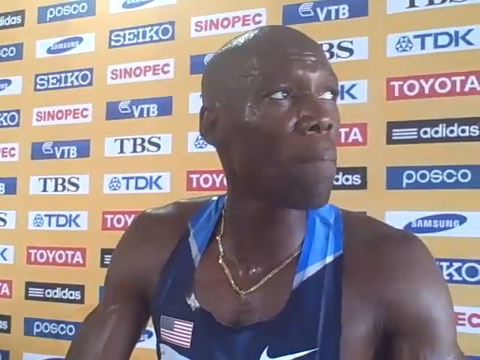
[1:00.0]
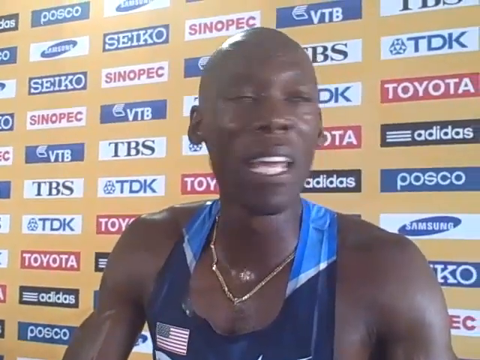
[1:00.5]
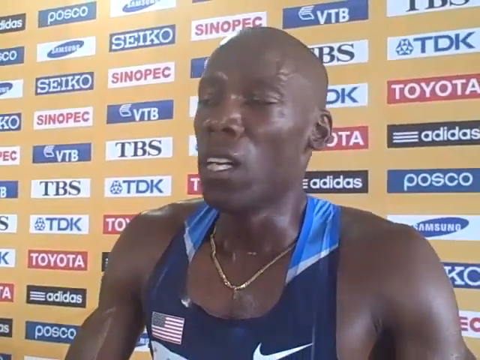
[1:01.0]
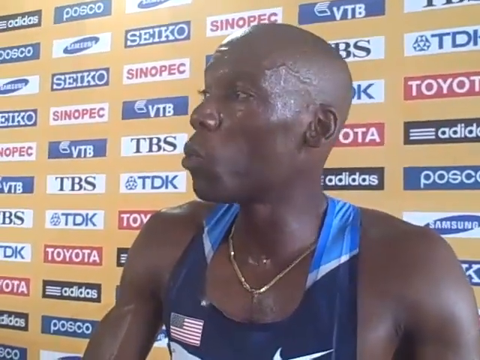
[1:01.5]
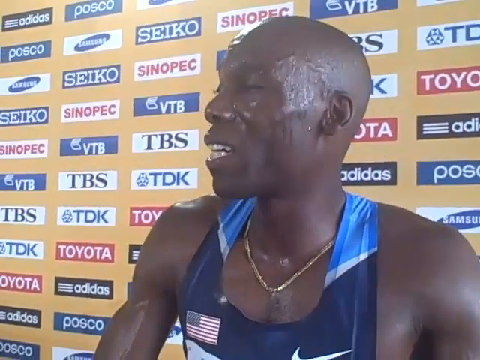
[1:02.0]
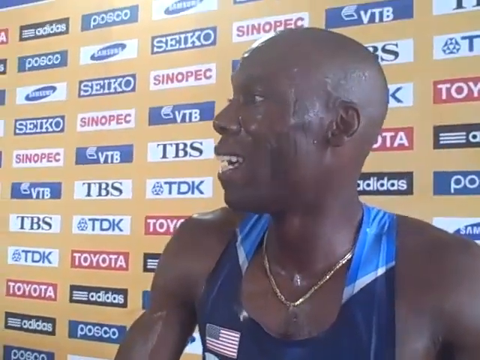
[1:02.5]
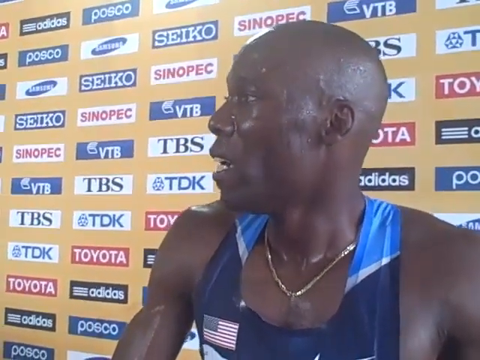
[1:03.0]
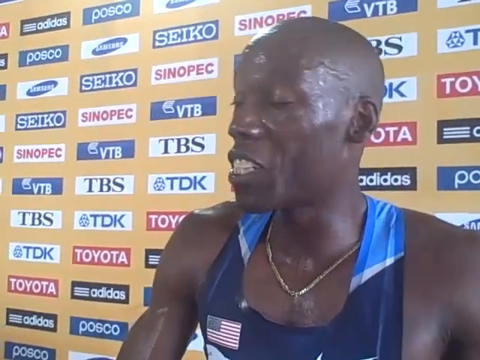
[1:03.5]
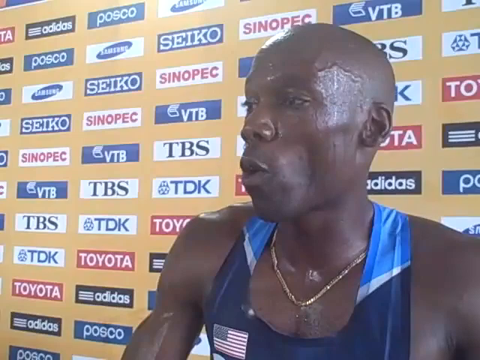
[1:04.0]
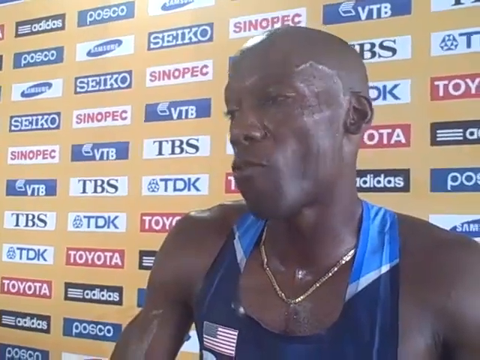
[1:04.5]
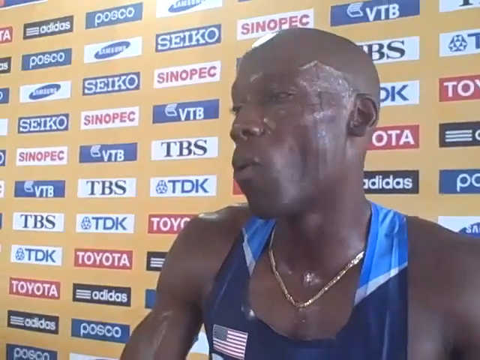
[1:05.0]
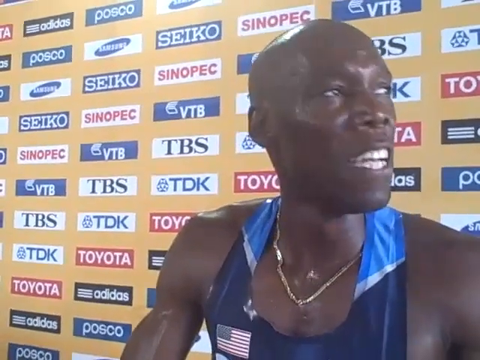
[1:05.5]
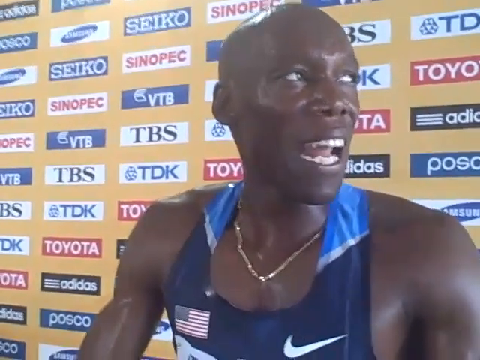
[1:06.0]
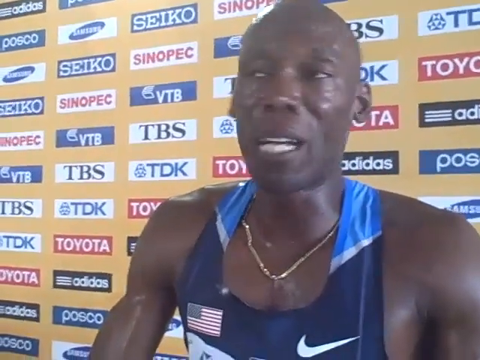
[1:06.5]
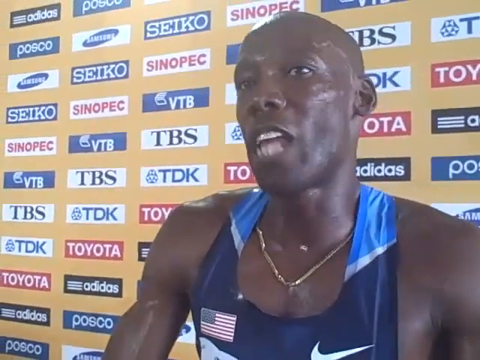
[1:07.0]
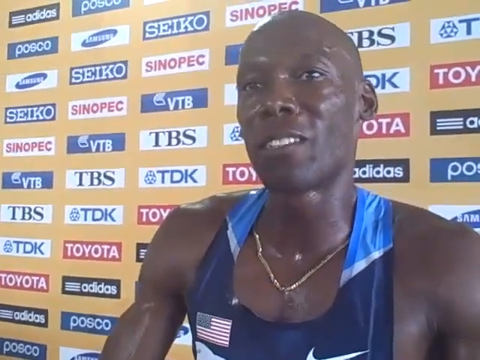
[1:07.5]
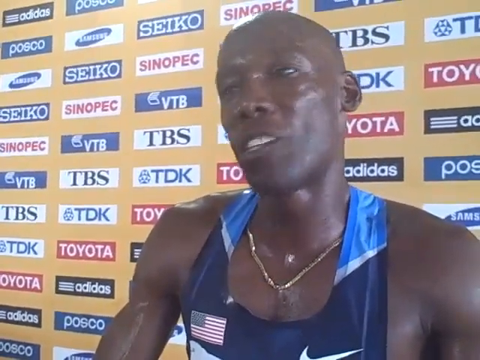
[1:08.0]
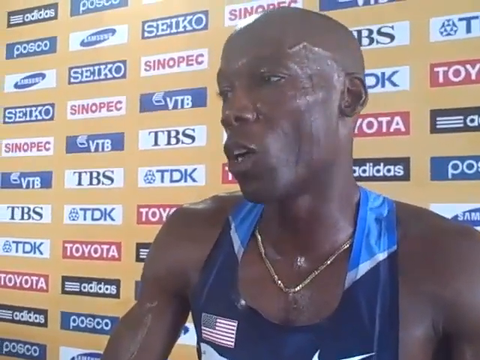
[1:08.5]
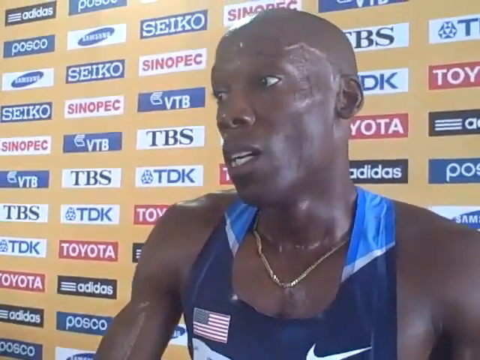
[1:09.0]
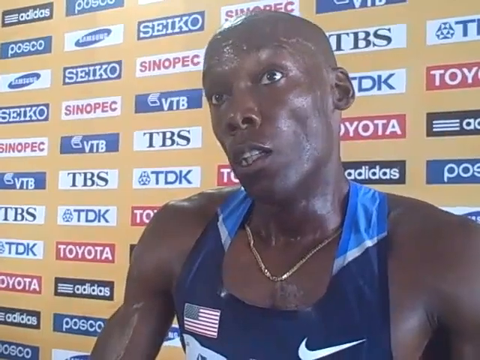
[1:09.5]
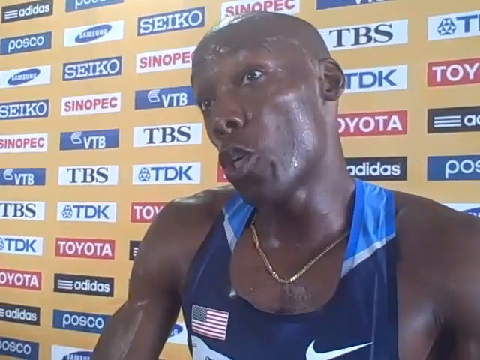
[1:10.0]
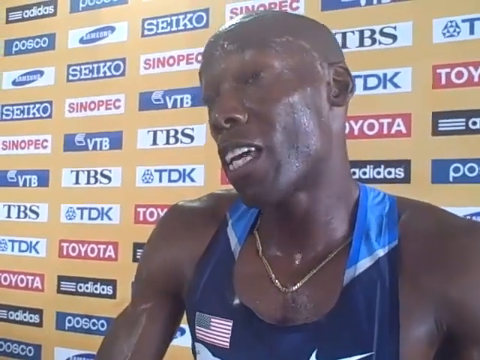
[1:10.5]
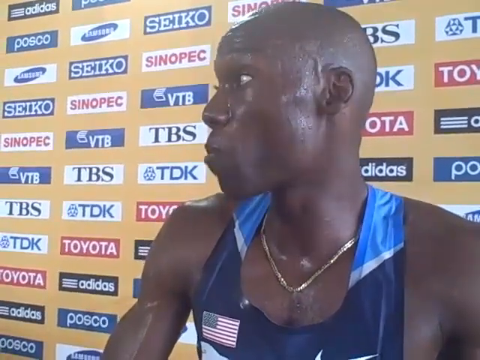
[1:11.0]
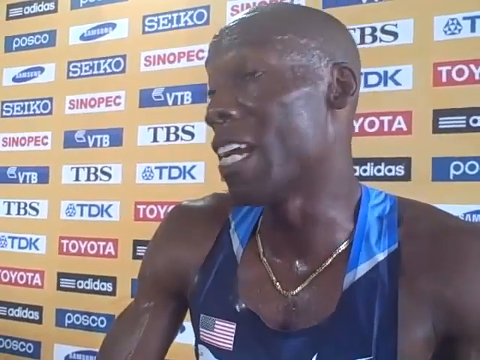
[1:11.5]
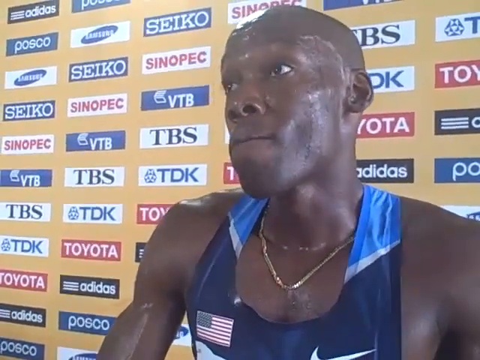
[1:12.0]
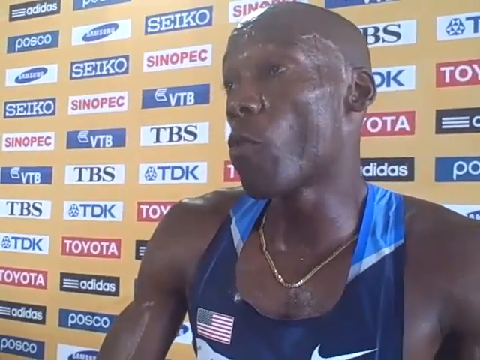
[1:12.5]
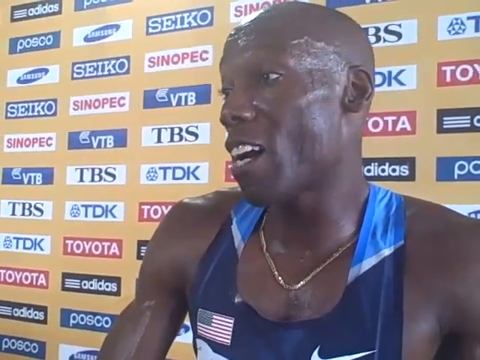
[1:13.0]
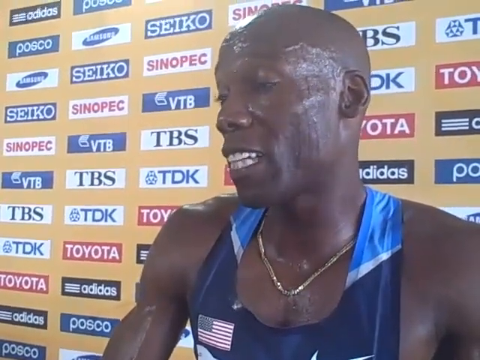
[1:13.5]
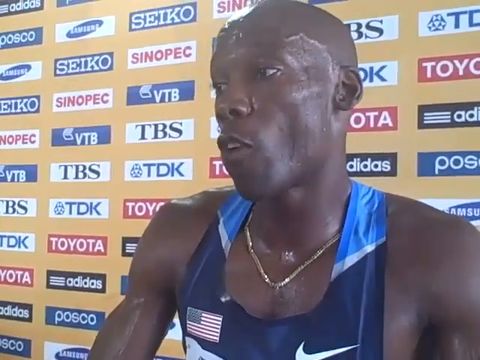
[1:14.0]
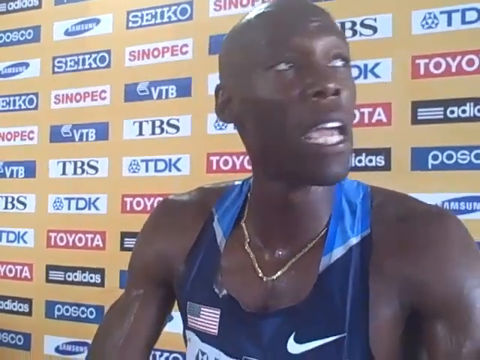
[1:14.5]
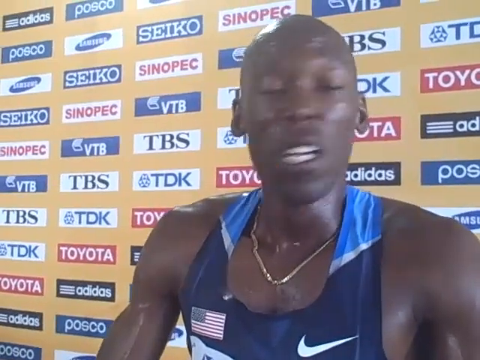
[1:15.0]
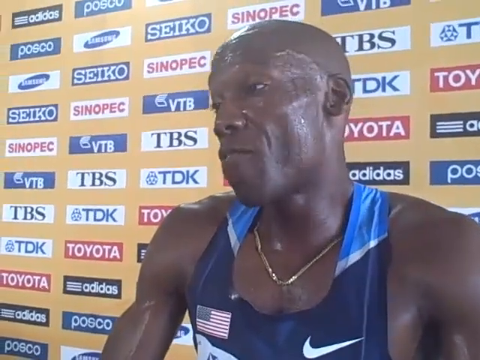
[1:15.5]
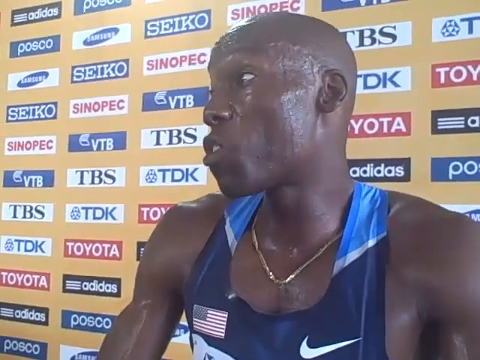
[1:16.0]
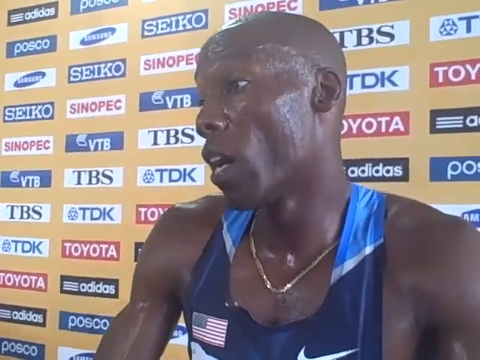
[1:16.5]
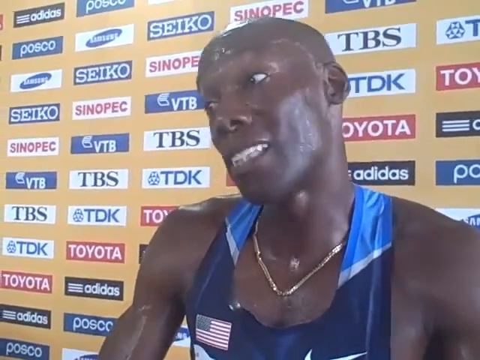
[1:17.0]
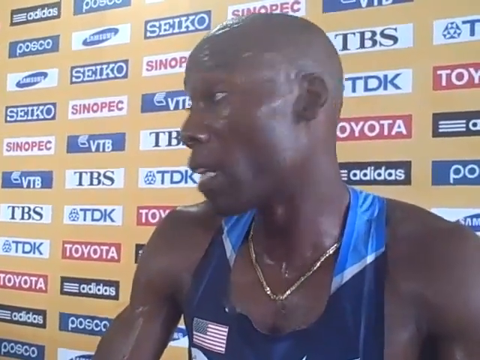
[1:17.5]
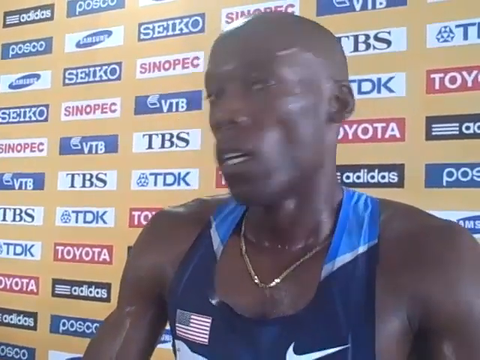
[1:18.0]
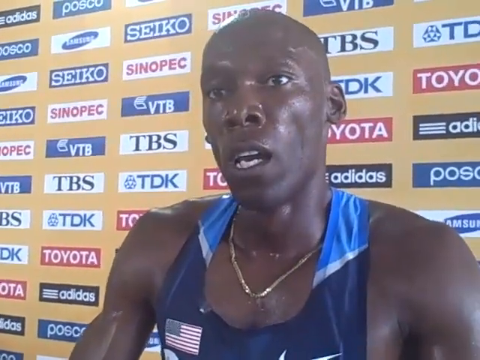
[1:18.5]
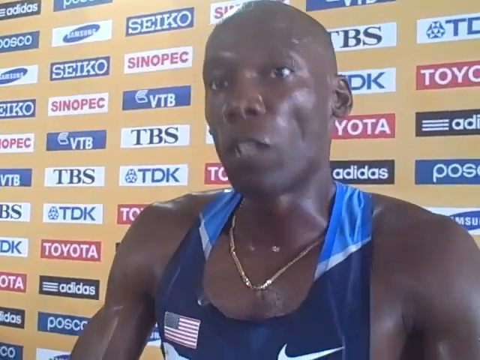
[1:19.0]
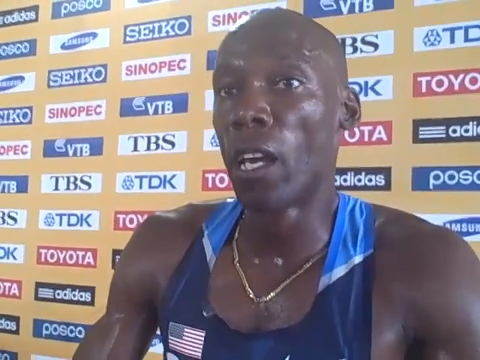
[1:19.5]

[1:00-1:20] He starts by looking towards his left side, turns back to face the interviewer, looks to his left again, and then quickly turns to his right side. He looks even more sweaty than before: sweat drips off his head, runs down his cheeks and lands below his neck. A closer look at his necklace shows it seems to be not just a gold chain but has a gold pennant in the center. He is still breathing heavily. The muscles on his arm are visible, specifically his biceps, with veins bulging from them, and veins also bulge from his ear and forehead. There are a few wrinkles in the center of his forehead, likely made on purpose rather than from age. His skin is pretty dark but looks a bit lighter around his chest and the bridge of his nose.